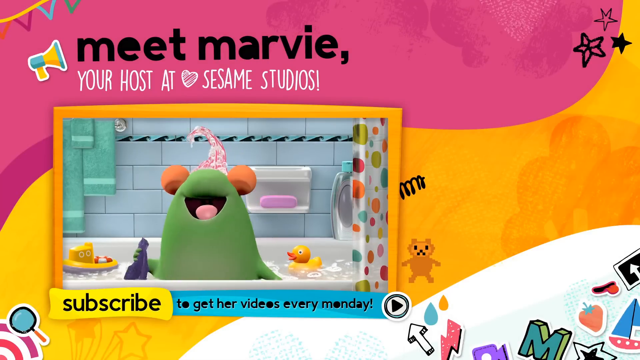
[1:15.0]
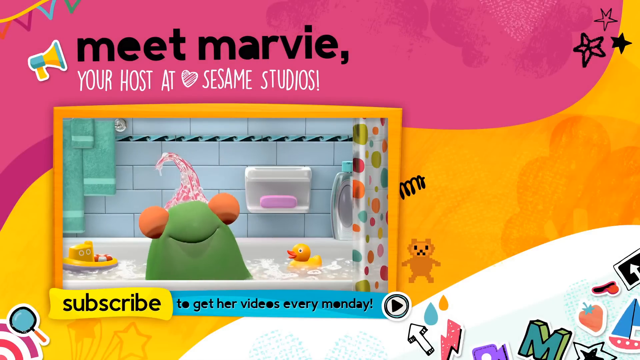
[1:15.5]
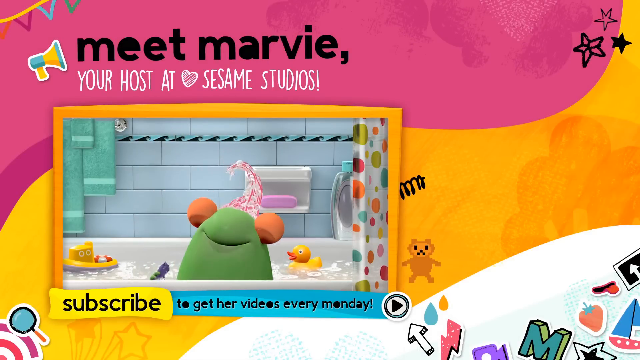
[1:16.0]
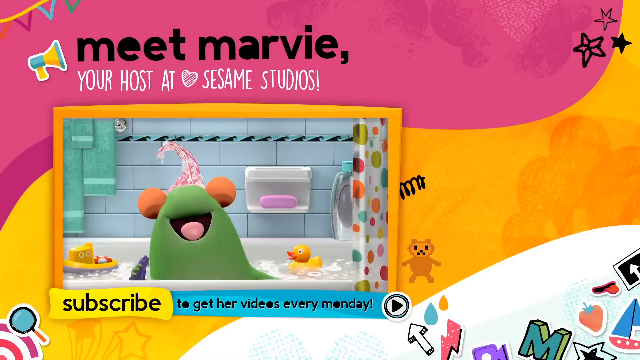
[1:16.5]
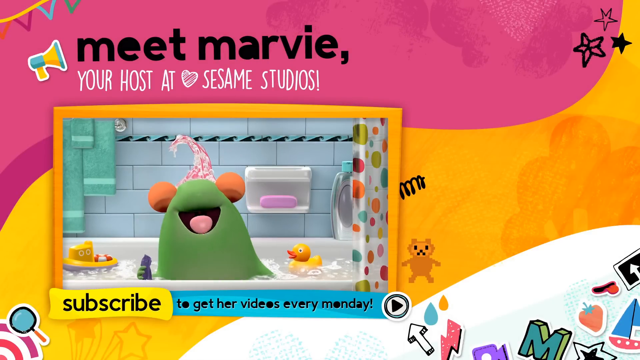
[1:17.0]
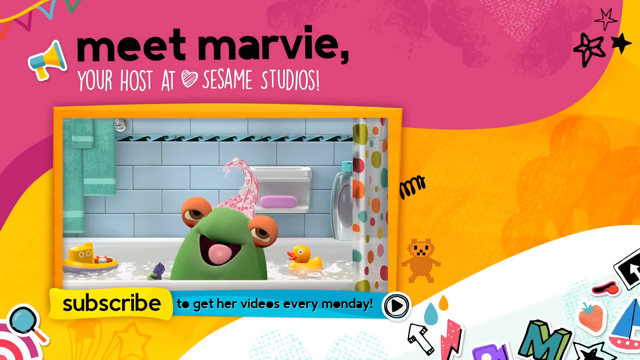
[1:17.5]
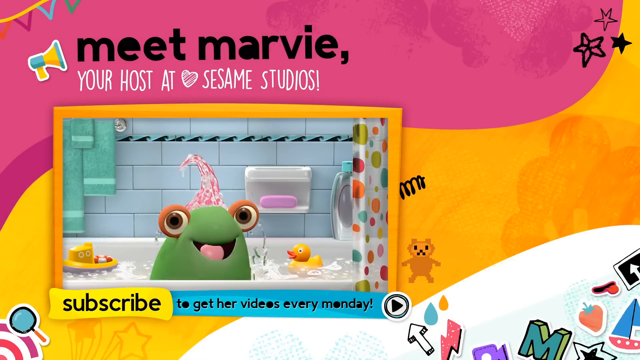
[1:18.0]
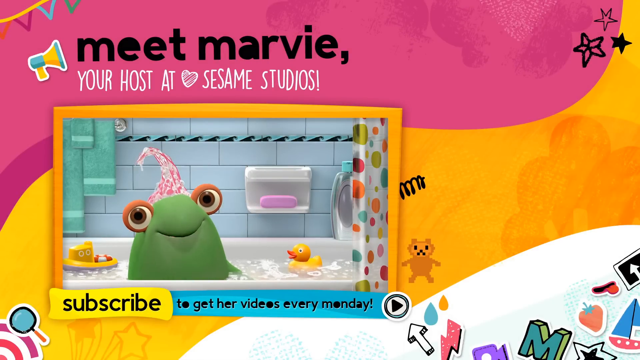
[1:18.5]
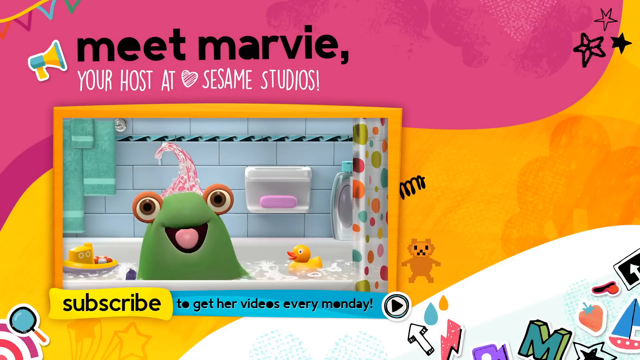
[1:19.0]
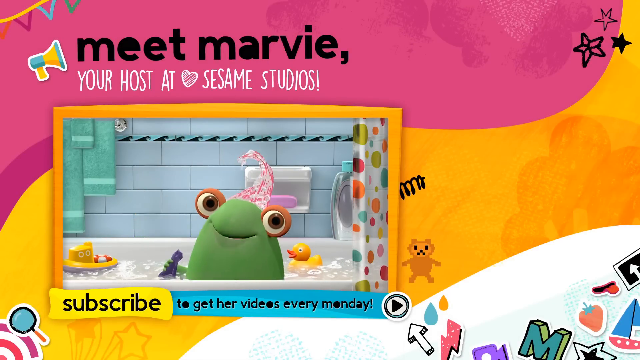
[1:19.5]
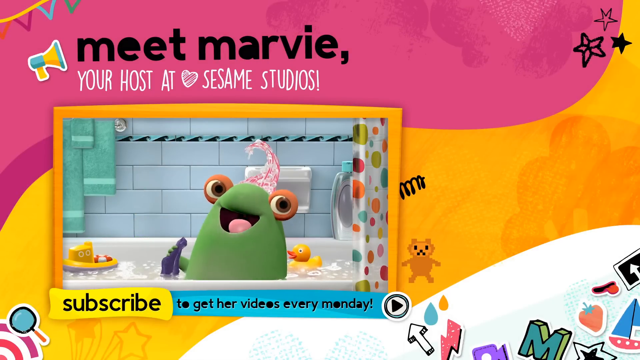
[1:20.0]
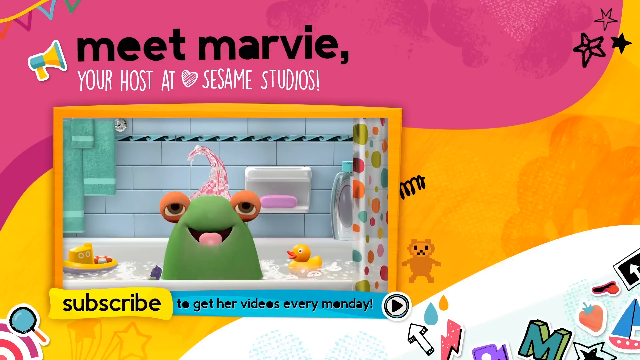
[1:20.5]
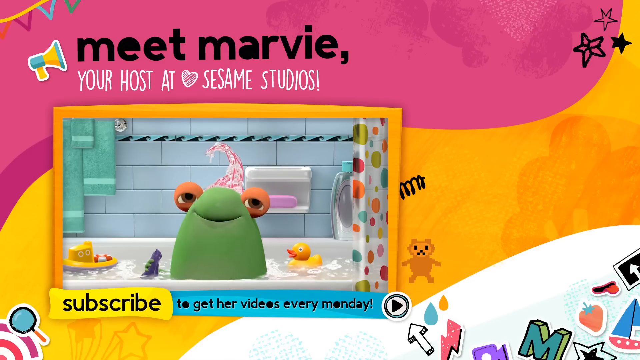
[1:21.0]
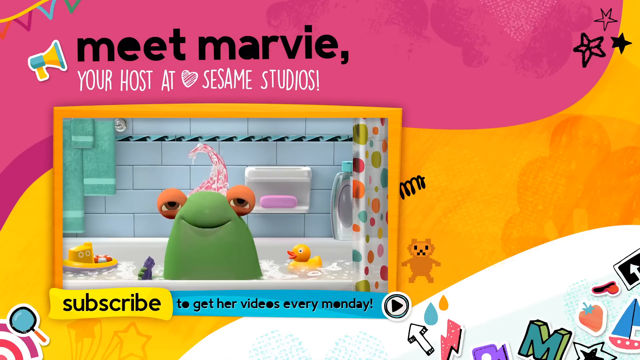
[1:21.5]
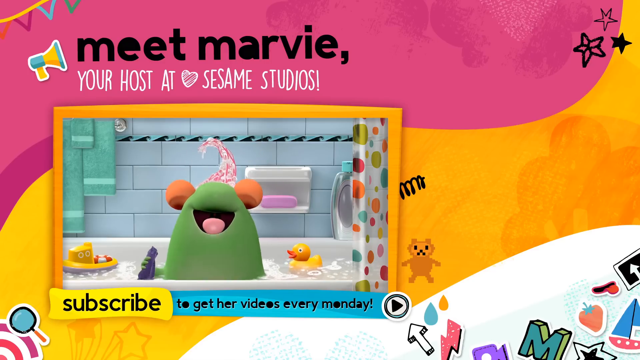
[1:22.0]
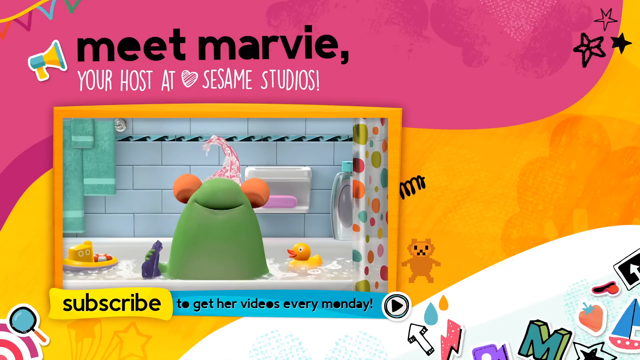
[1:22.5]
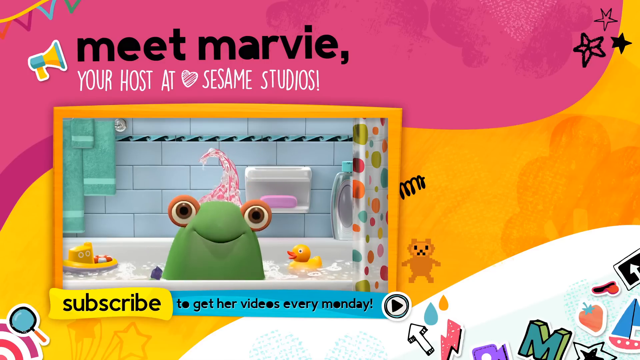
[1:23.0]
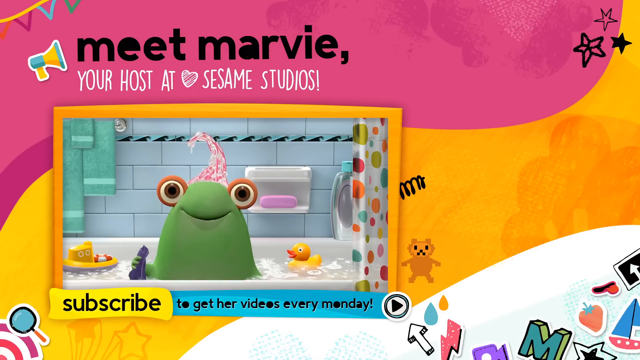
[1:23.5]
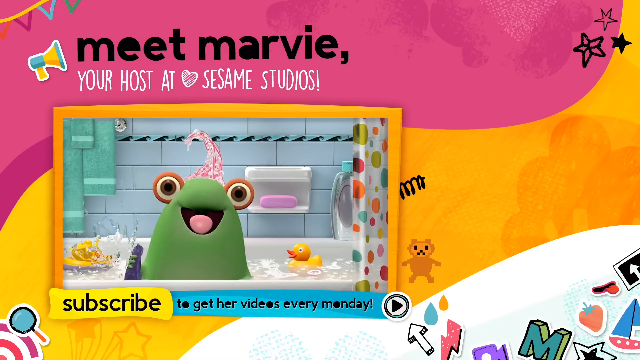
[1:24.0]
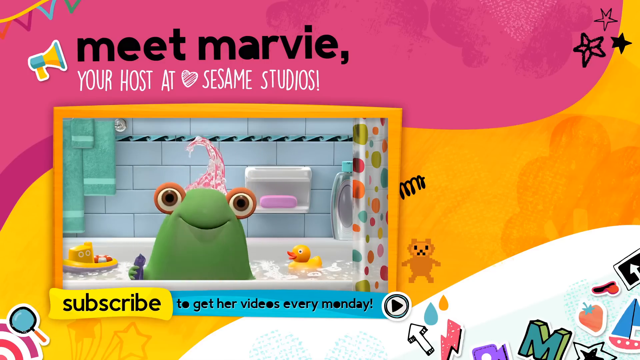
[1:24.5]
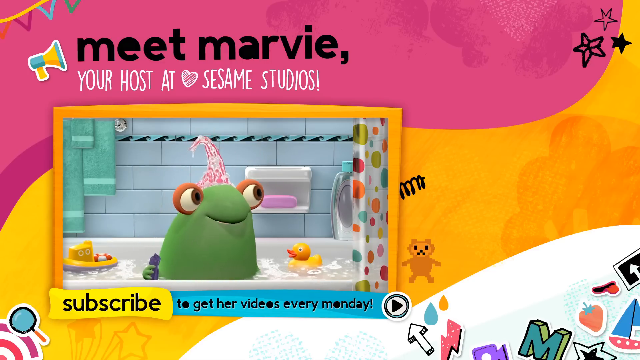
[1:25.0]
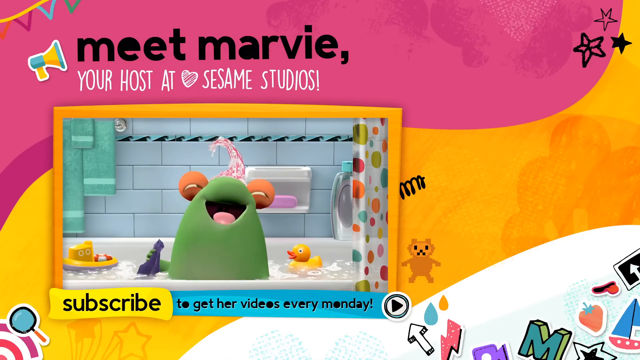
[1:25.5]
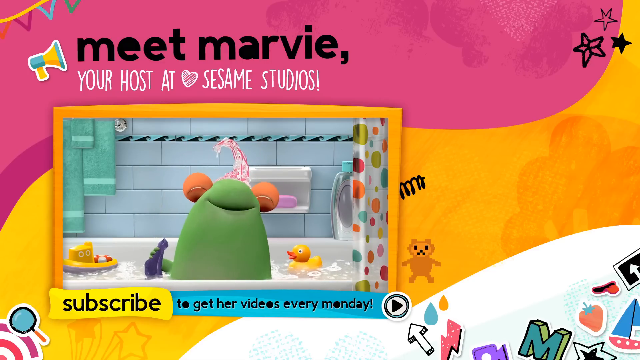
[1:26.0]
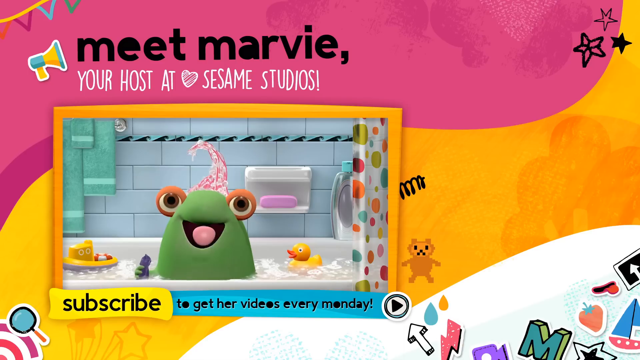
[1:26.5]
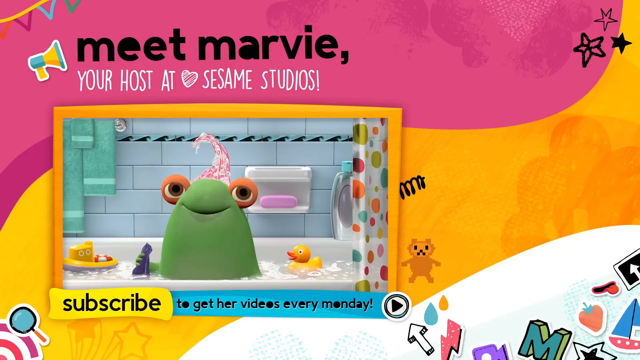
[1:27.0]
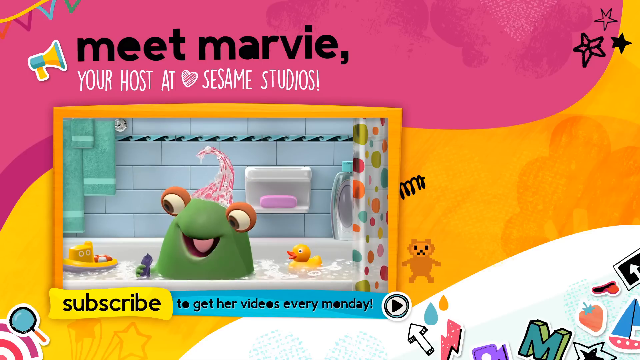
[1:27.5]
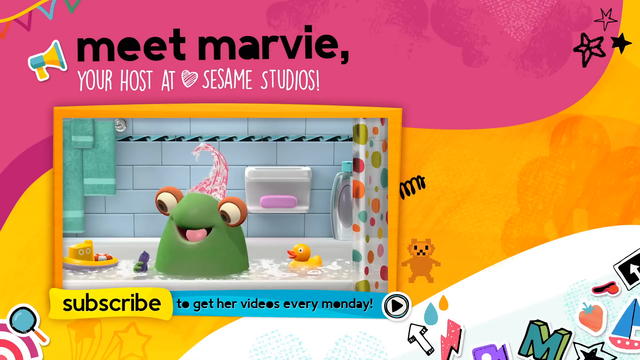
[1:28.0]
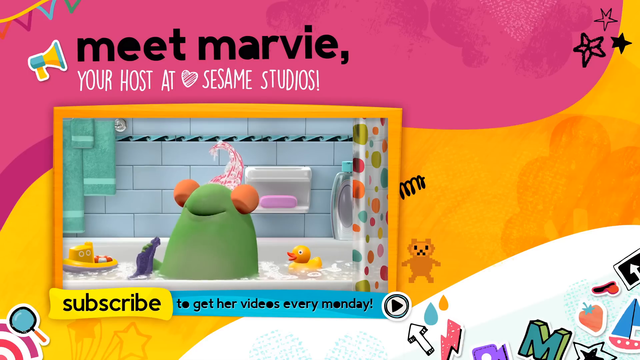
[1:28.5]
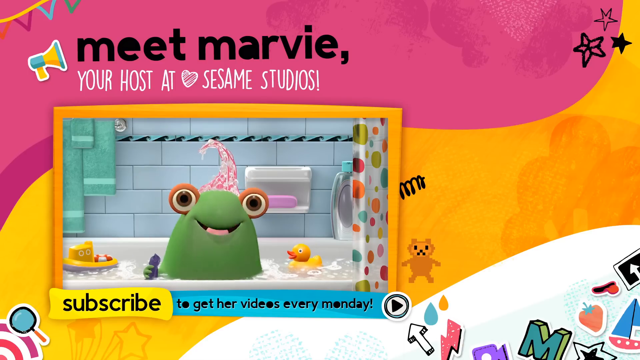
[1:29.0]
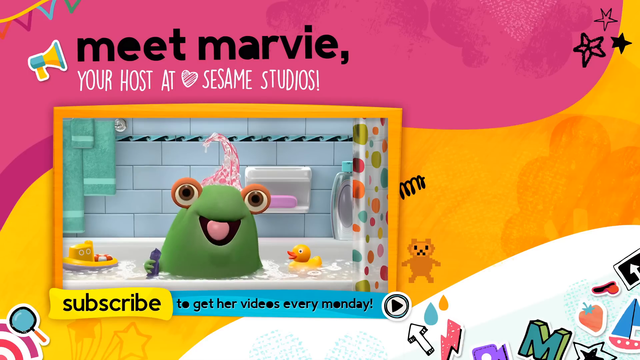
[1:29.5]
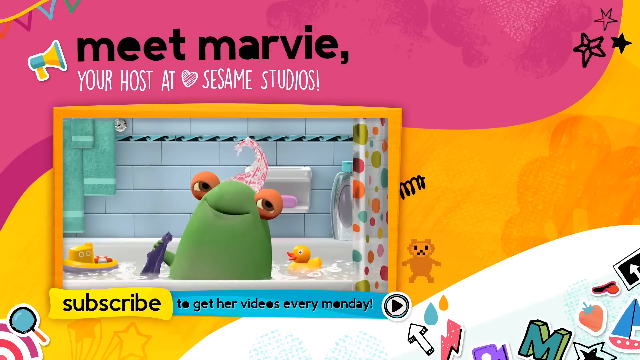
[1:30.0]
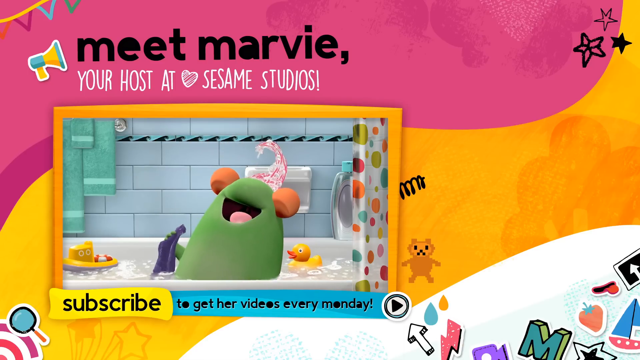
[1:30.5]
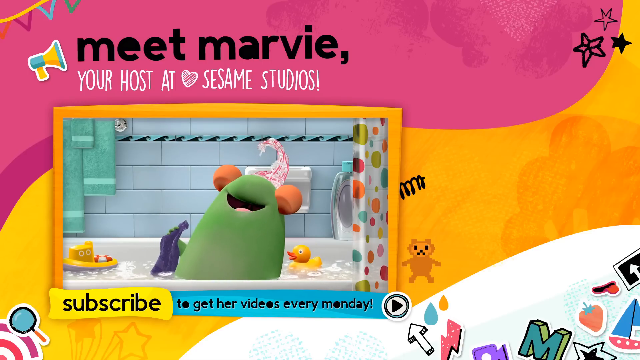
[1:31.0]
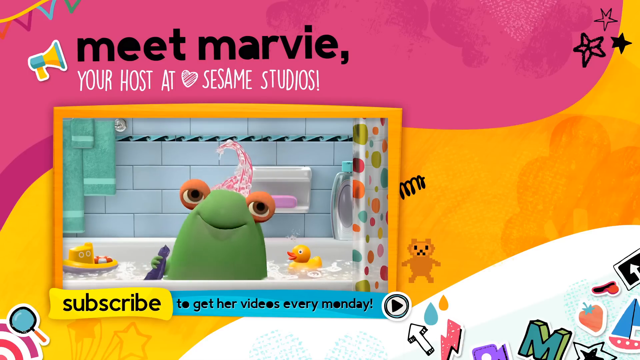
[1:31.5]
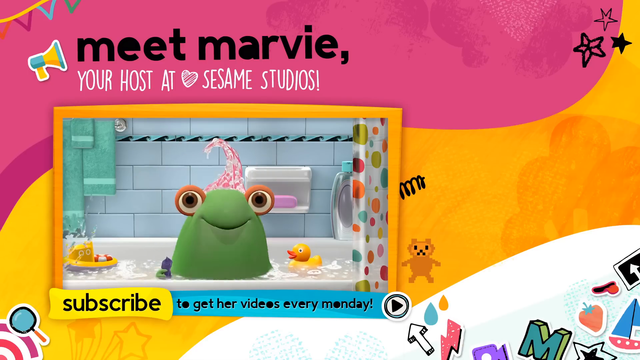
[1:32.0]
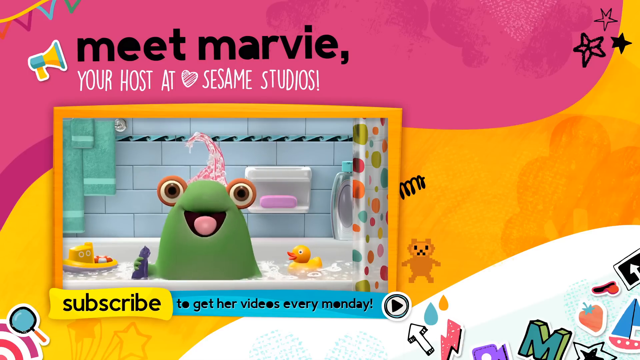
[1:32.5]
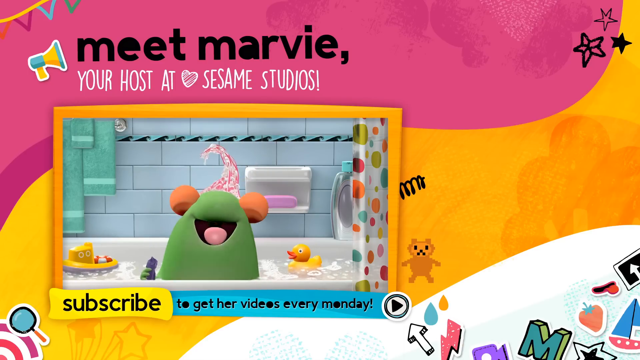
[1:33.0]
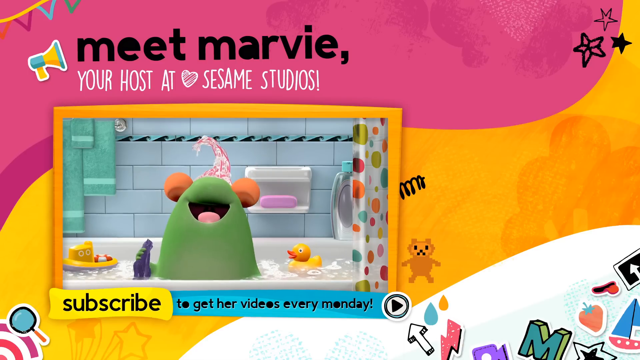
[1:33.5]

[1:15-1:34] Black text reads "meet Marvie," with white text under it reading "you're host at Sesame Studios"; the white text has a white, slightly lined heart. An orange border surrounds a video of the green character sitting in a bathtub. He is wearing something white and red on his head. There is a pink soap in the background, two yellow rubber duckies in the water, blue towels hanging on the wall, and a white and multicolored polka-dot shower curtain. A yellow banner has black text reading "subscribe," and a blue banner has black text reading "to get her videos every Monday." The background is pink, orange and white with a variety of stickers. The character bounces around in the tub and looks like he is singing. He talks very happily and repeatedly opens and closes his eyes very tightly while looking up and then back at the camera. He keeps looking down at what he is holding in his hand, which looks like a washrag he is pretending is a microphone.